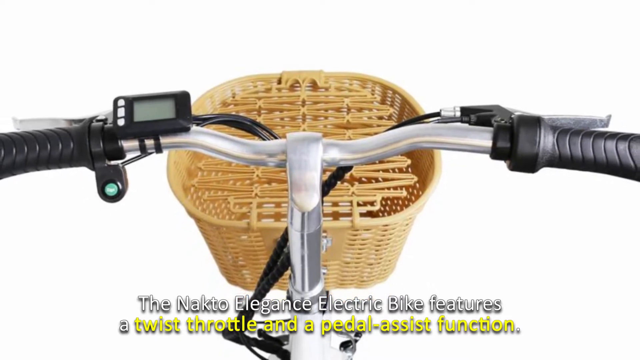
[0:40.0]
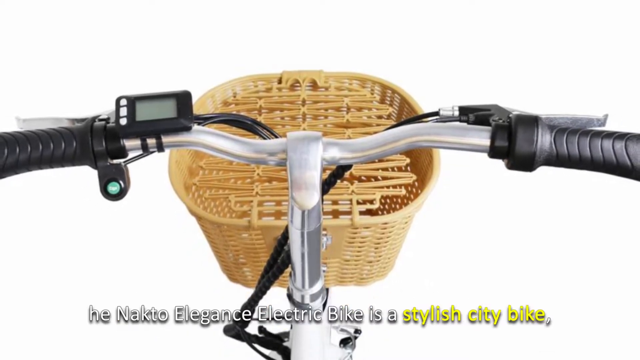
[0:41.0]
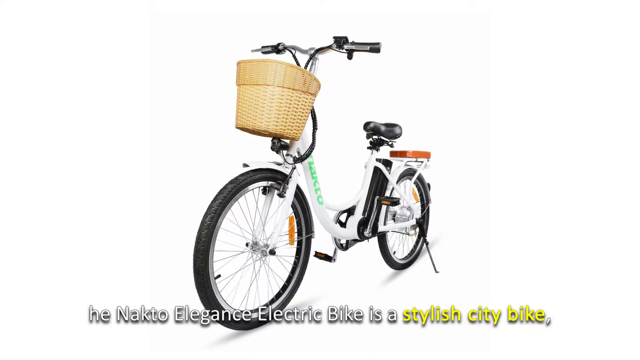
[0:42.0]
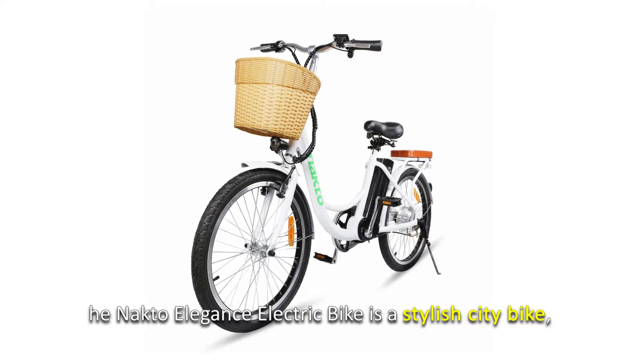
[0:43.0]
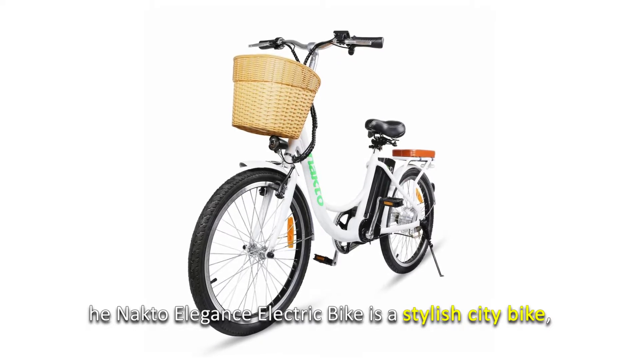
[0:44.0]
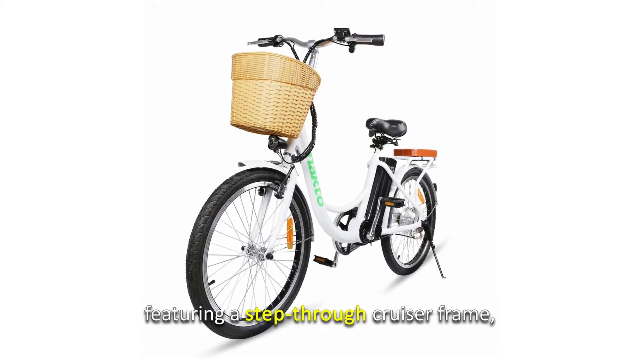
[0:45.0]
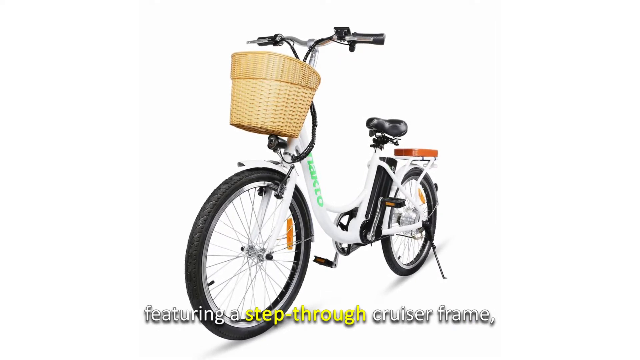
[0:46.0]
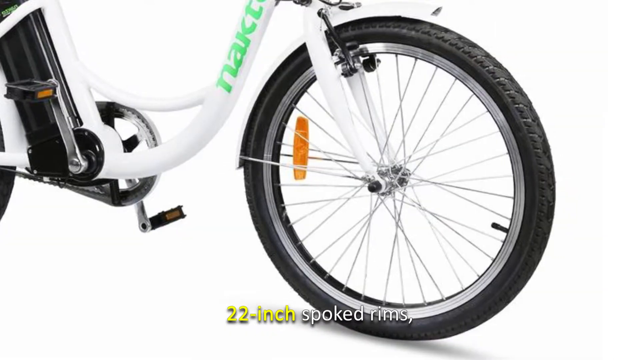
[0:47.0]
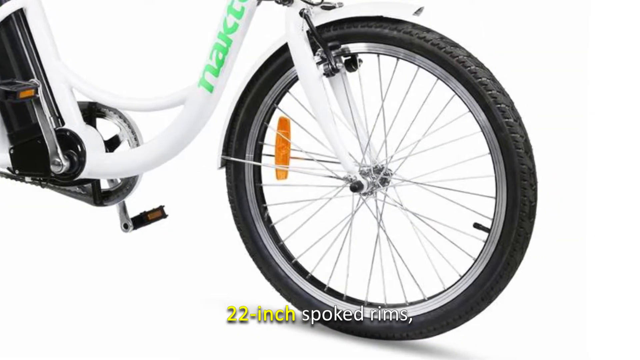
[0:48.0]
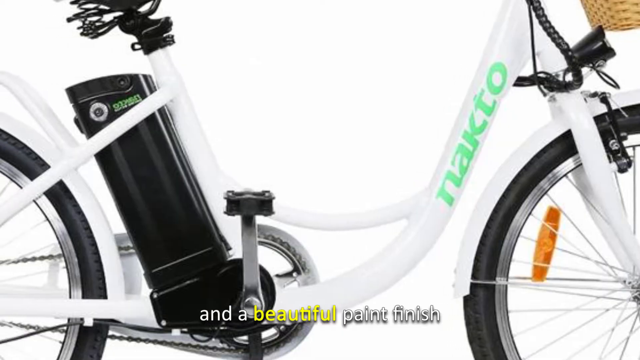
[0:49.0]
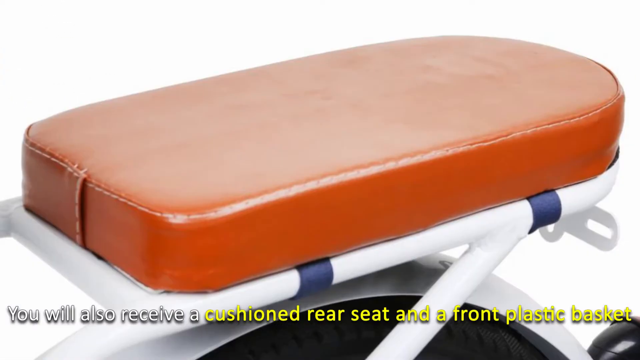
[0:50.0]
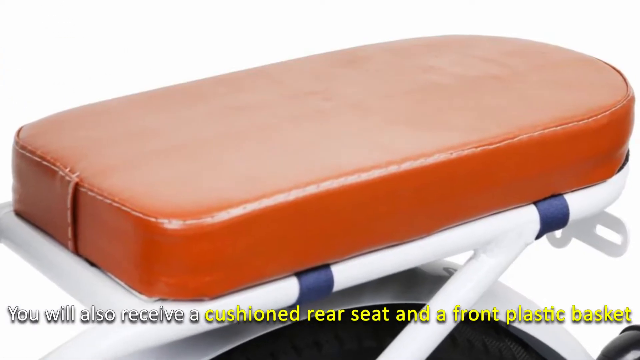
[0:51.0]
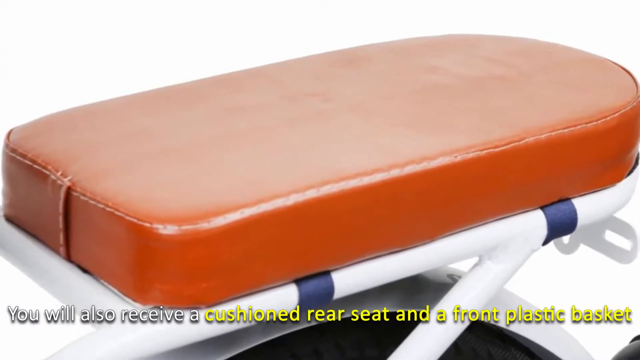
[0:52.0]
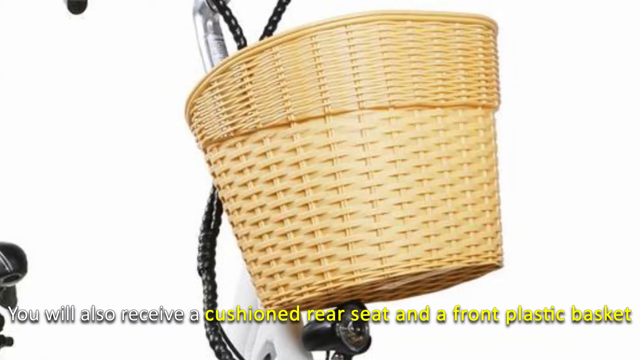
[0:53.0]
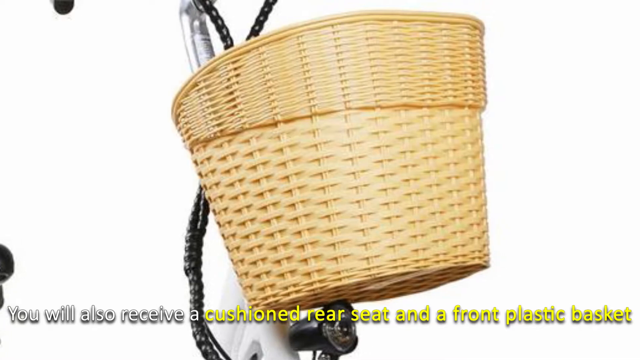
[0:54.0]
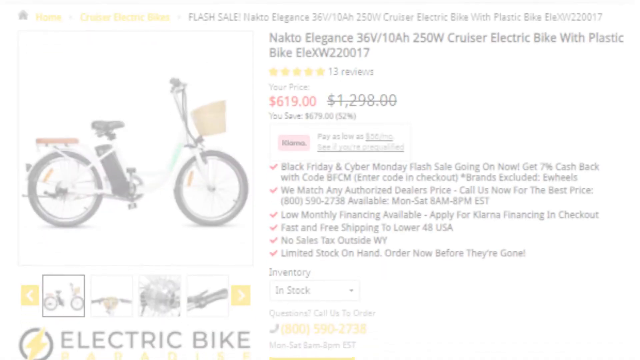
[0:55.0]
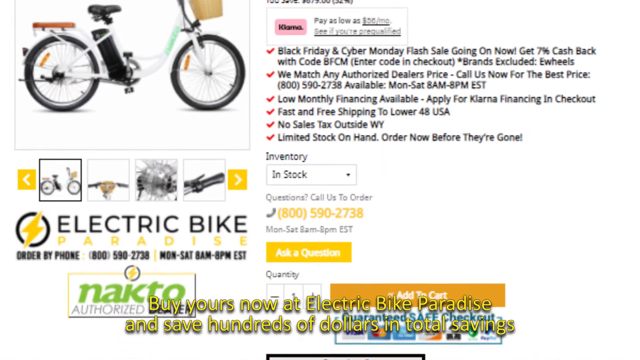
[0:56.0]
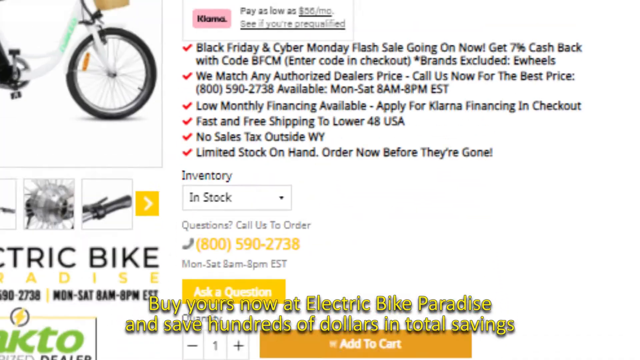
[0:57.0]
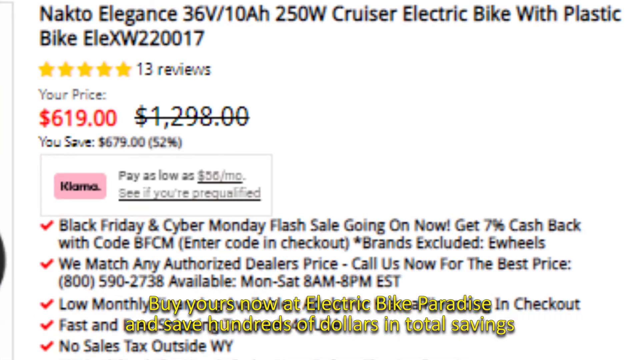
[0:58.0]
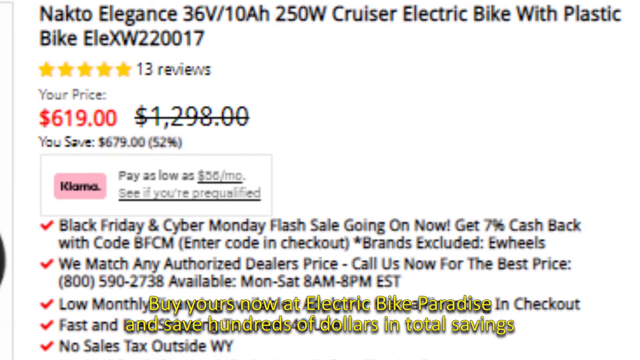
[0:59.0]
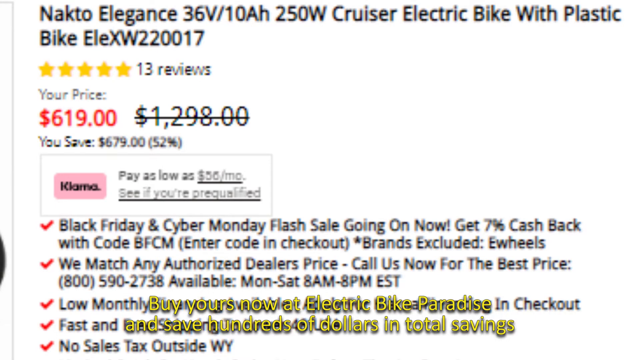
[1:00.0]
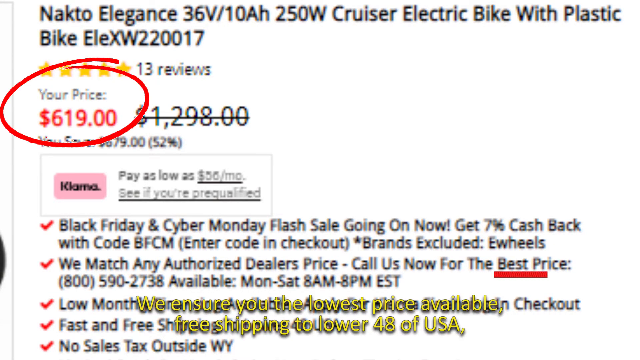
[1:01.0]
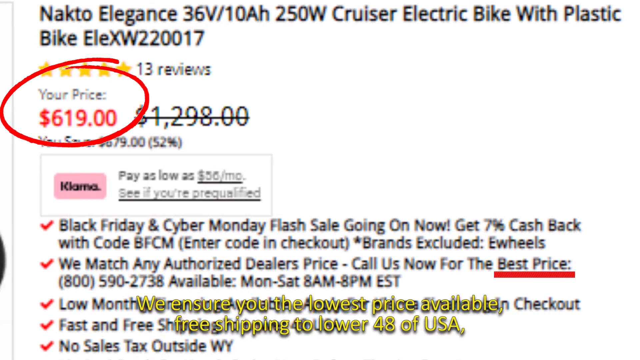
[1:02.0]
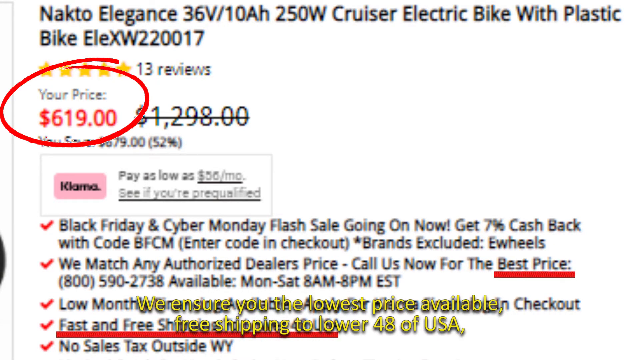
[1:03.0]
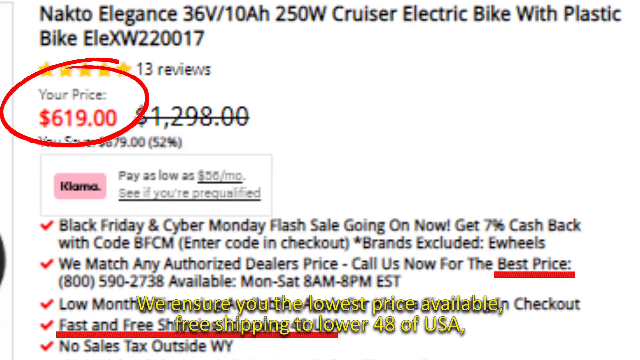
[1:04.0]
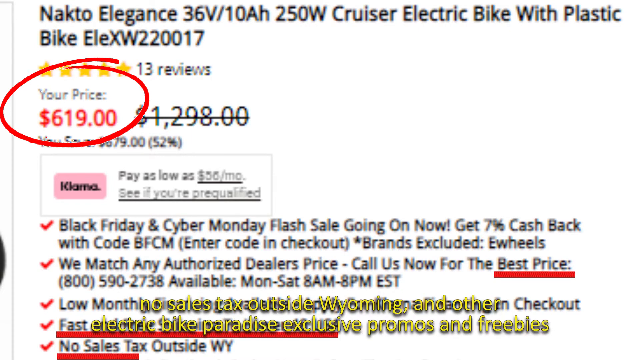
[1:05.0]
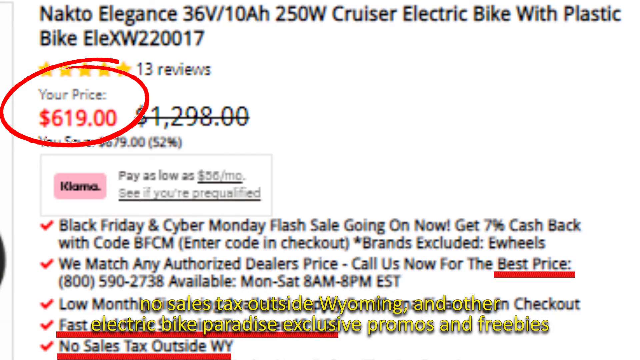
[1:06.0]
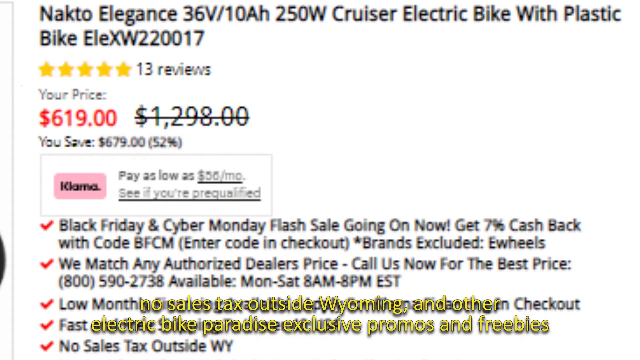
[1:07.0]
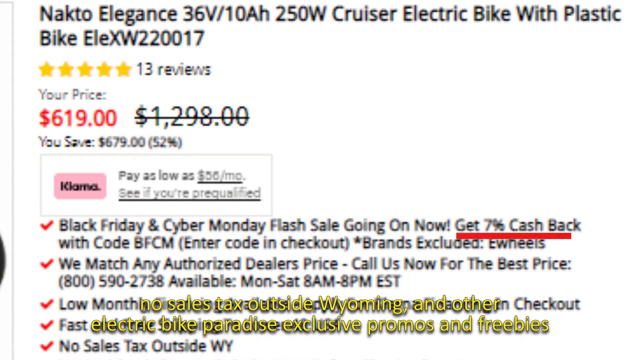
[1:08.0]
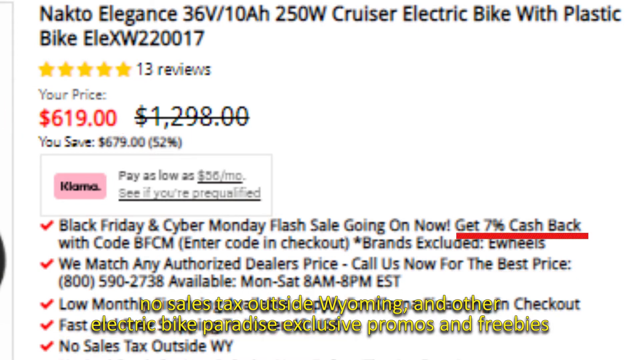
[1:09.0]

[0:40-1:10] The Nakto Elegance electric bike, featuring a twist throttle and a pedal assist function, is shown in full. It is white with the brand name in green, and has a basket in front, black handles with an object on top of them, black tires, lights, a stand, and a seat for the main cyclist plus one for a passenger. It is described as a stylish bike with 22-inch rims, a brown cushioned rear seat and a front basket bucket. The price is then shown: it retails for $619, down from an original price of $1,298, saving $679, a 52% savings, as part of a Black Friday and Cyber Monday flash sale. Text states that buyers get 7% cash back with code BFCM entered at checkout, and that the e-wheels brand is excluded. Additional information reads that they match any authorized dealer's price and gives the number 800-590-2738 to call for the best price, available Monday to Saturday 8am to 8pm EST. A product description for the Nakto Elegance 36V 10AH 250W cruiser electric bike shows 13 reviews.